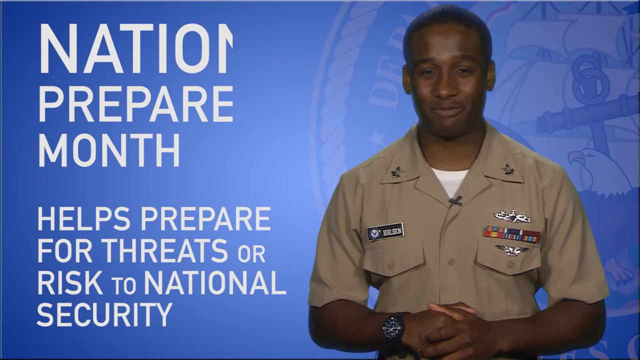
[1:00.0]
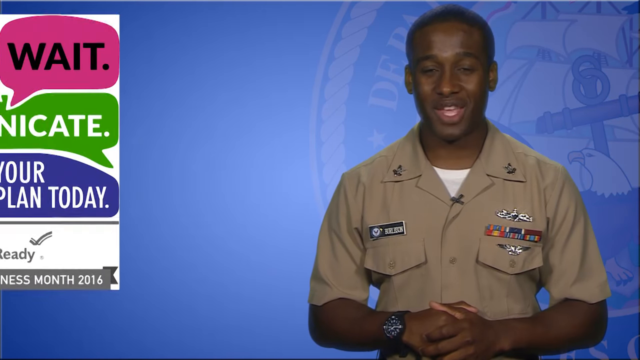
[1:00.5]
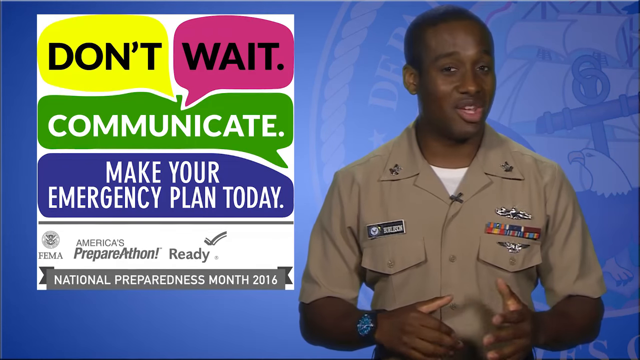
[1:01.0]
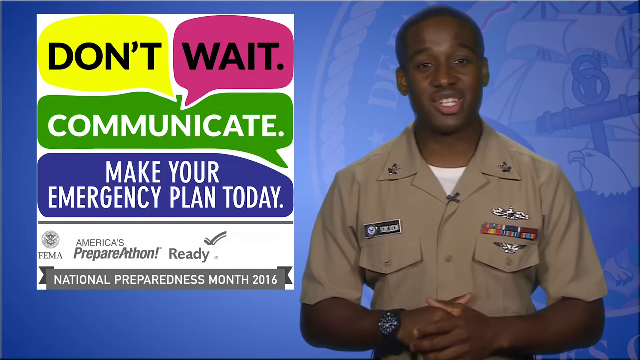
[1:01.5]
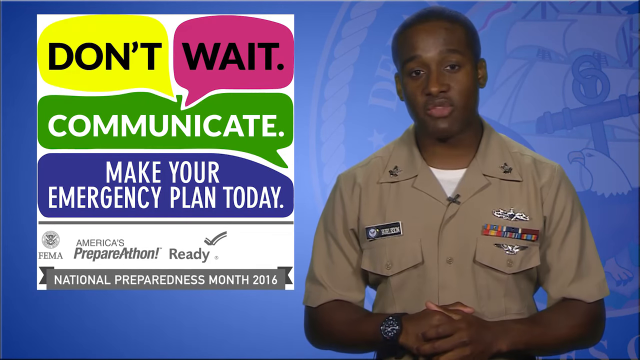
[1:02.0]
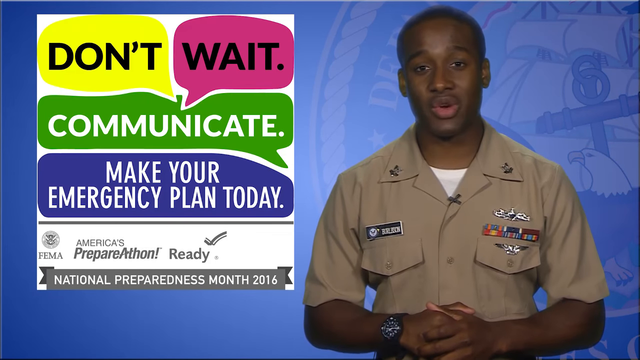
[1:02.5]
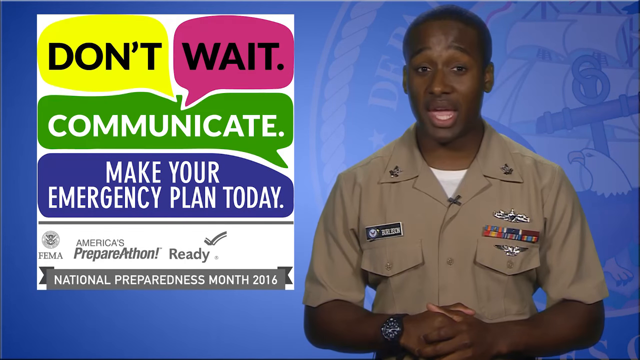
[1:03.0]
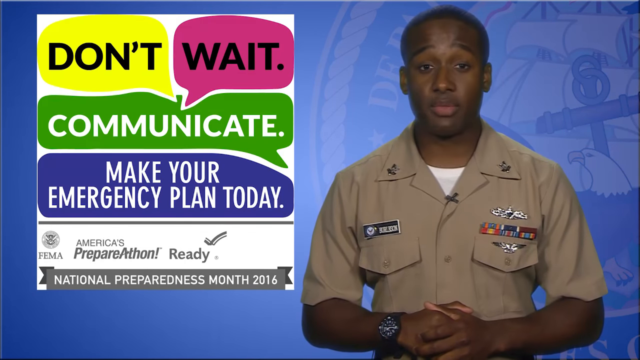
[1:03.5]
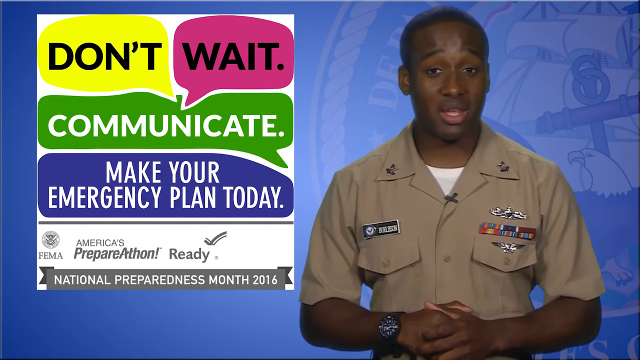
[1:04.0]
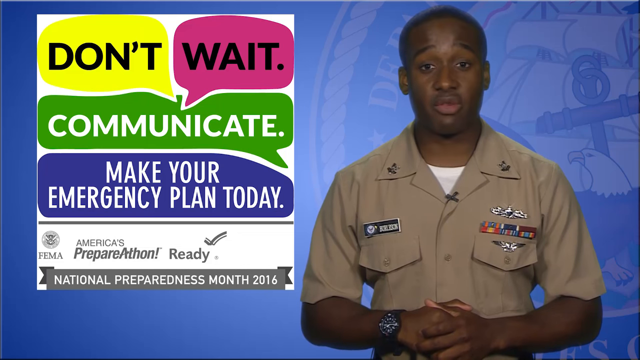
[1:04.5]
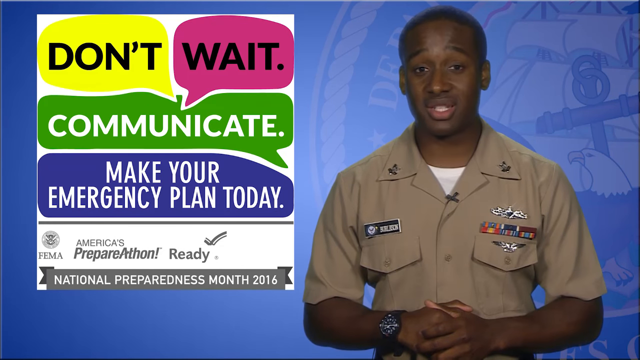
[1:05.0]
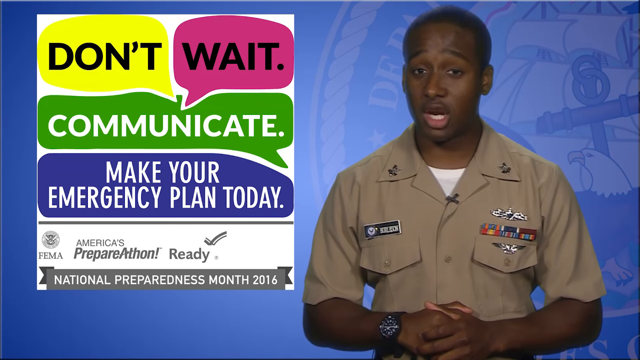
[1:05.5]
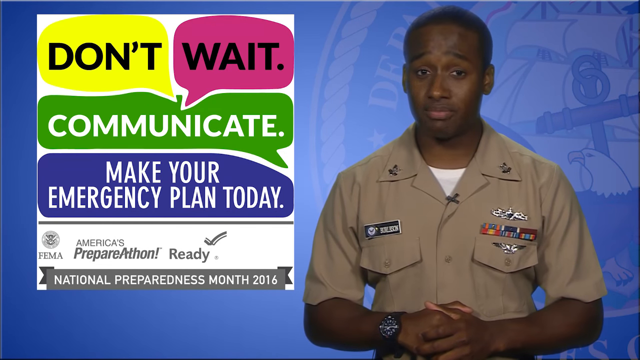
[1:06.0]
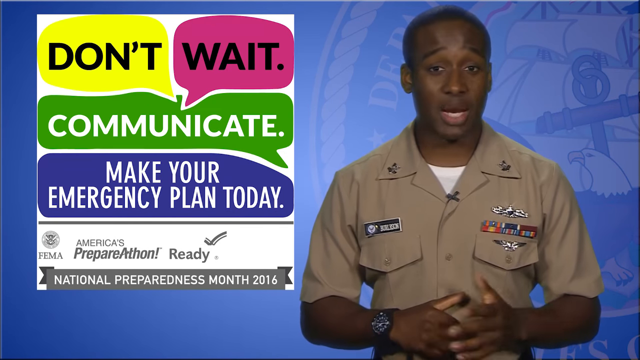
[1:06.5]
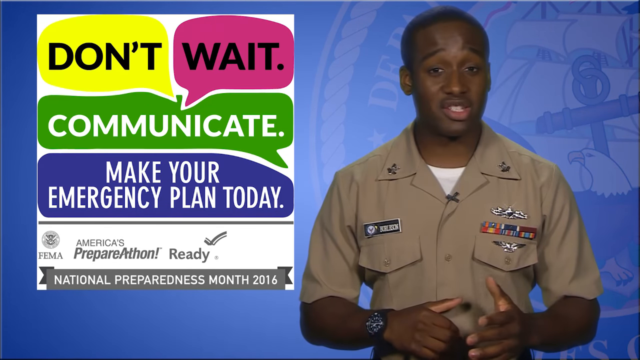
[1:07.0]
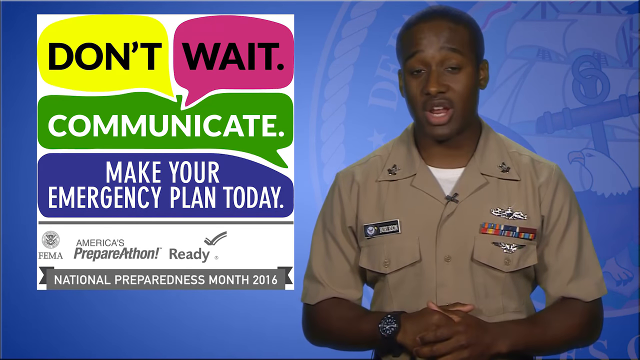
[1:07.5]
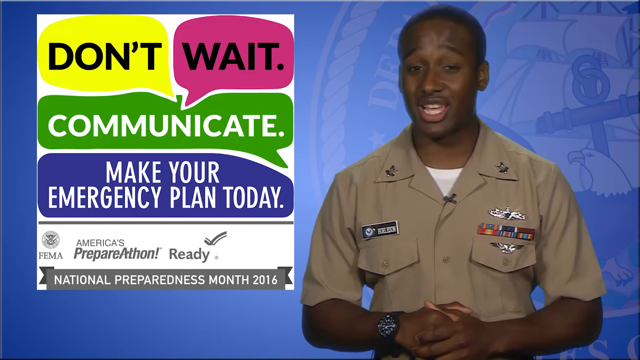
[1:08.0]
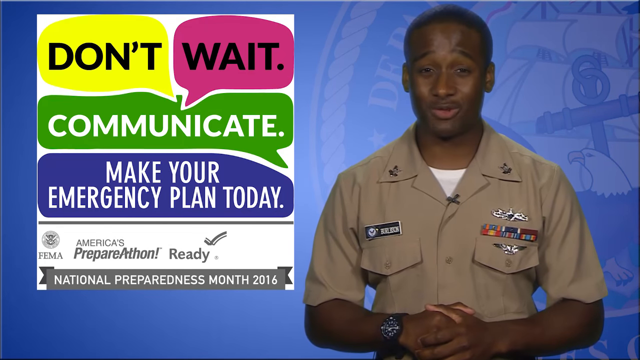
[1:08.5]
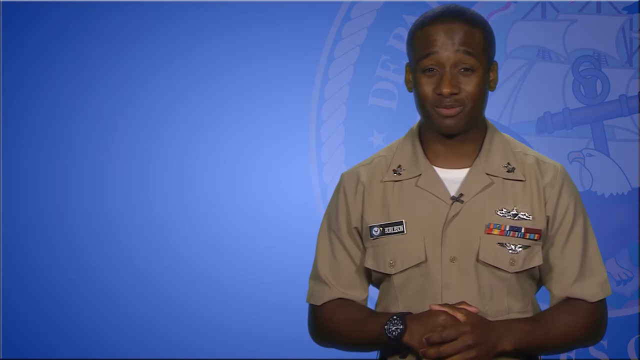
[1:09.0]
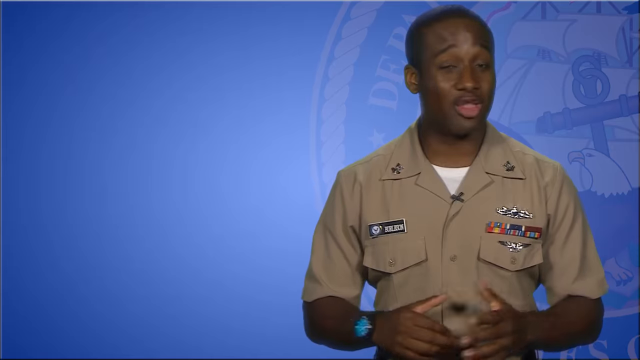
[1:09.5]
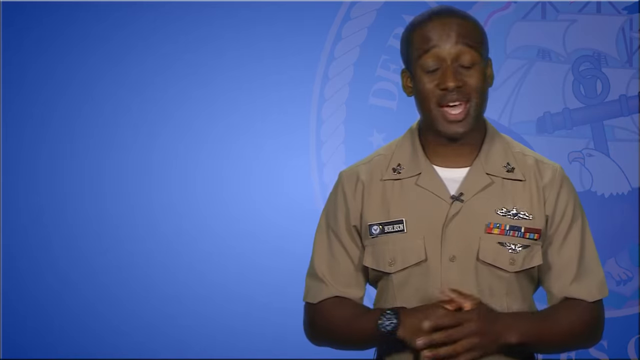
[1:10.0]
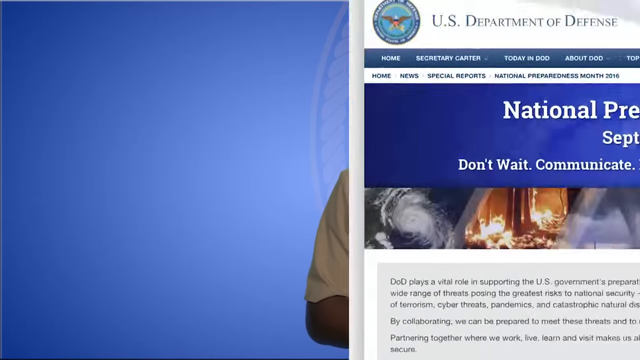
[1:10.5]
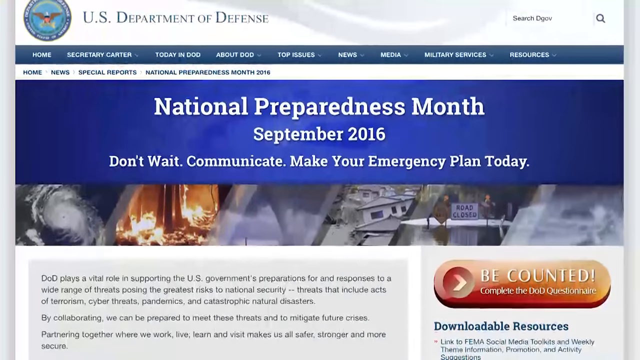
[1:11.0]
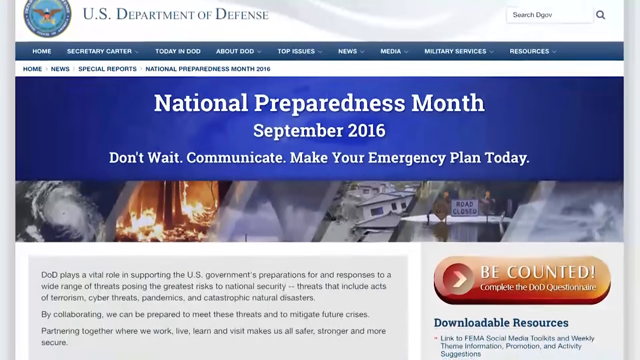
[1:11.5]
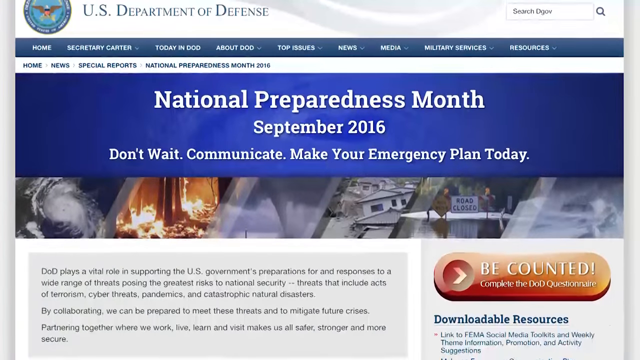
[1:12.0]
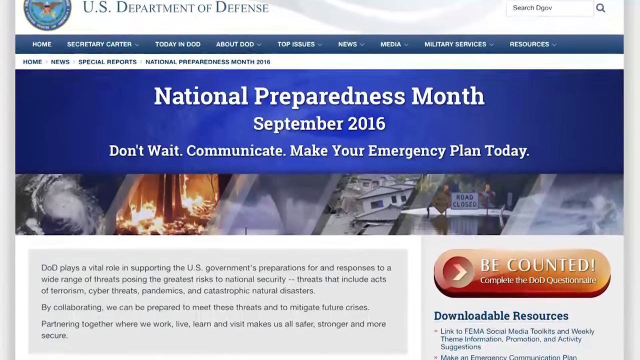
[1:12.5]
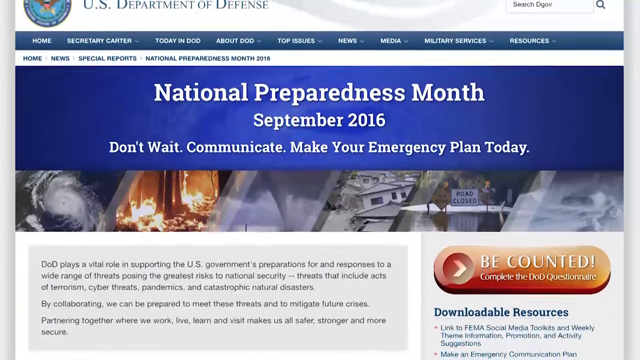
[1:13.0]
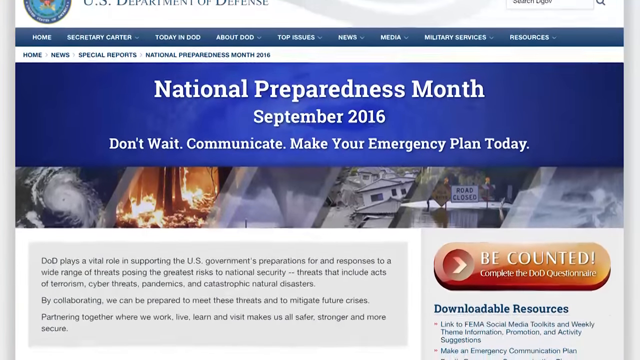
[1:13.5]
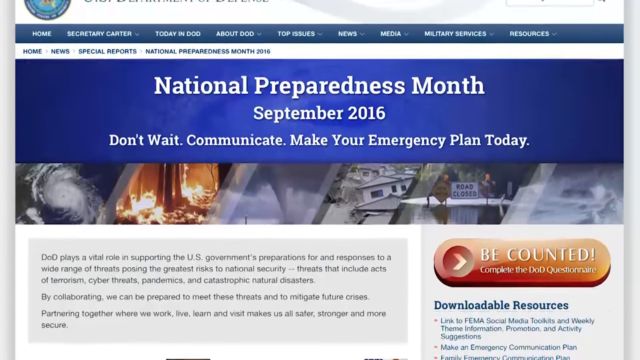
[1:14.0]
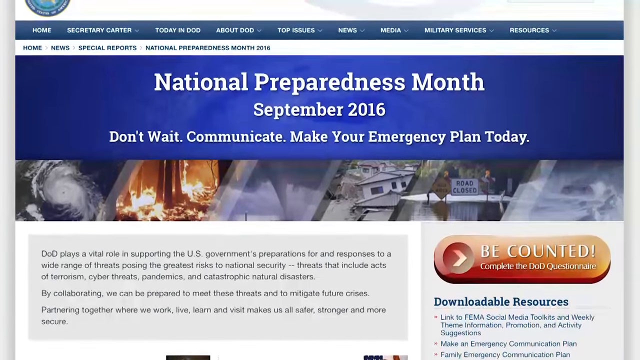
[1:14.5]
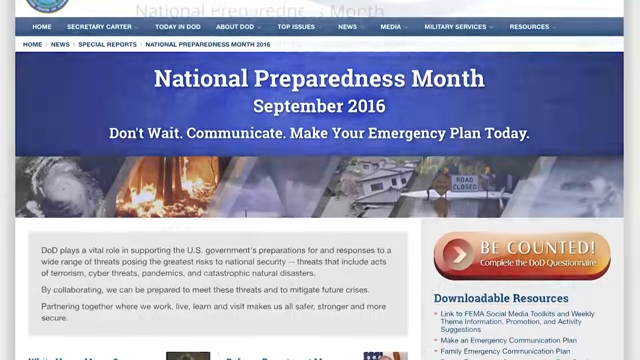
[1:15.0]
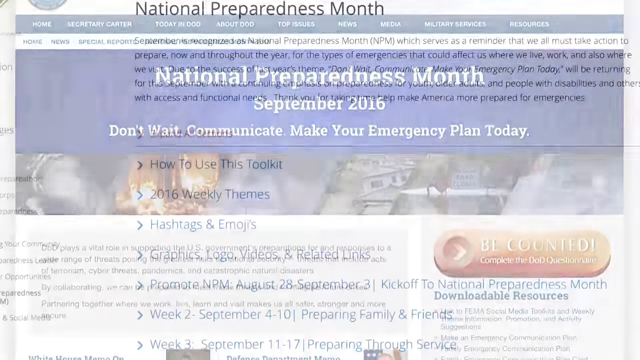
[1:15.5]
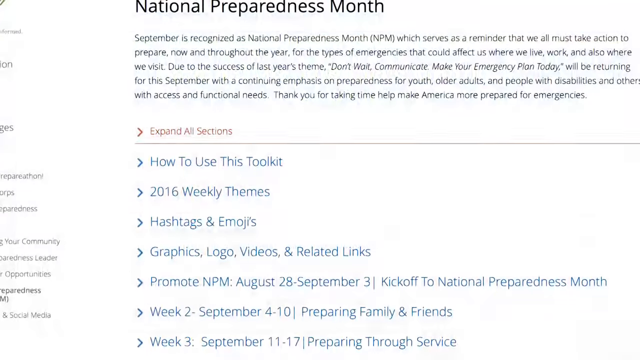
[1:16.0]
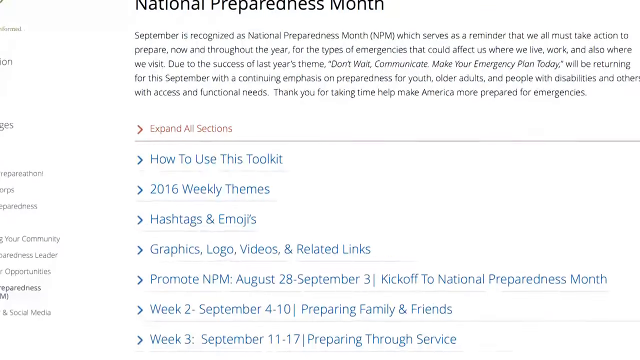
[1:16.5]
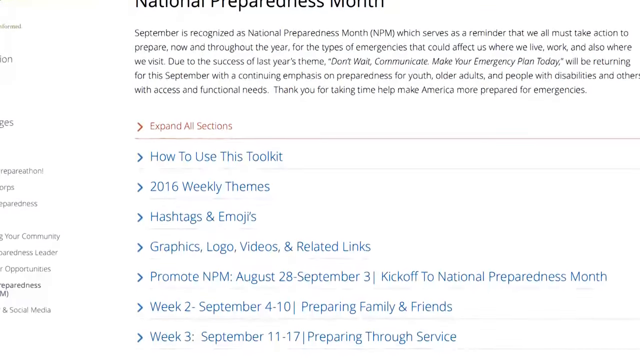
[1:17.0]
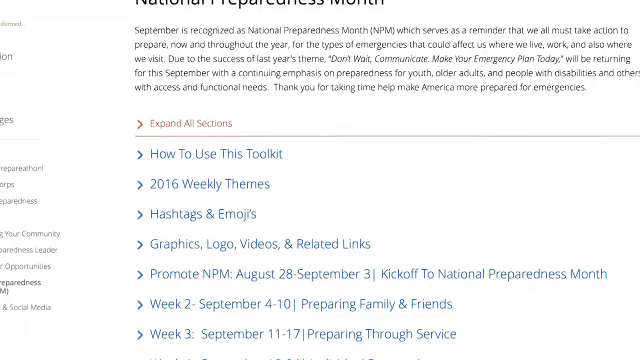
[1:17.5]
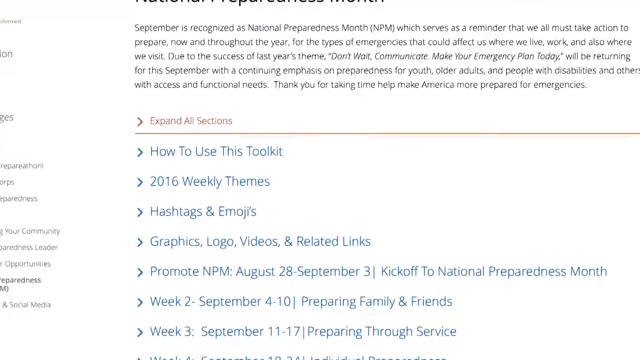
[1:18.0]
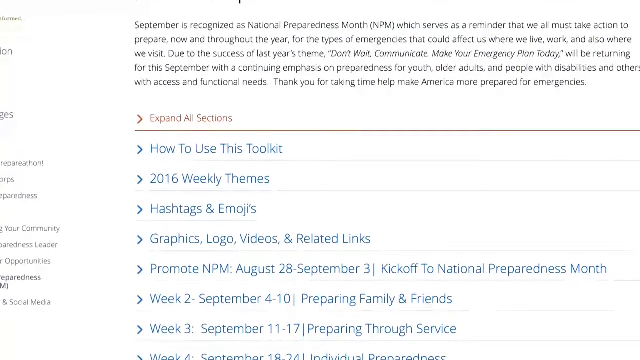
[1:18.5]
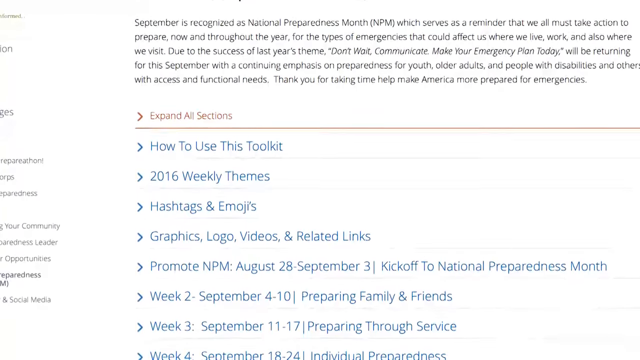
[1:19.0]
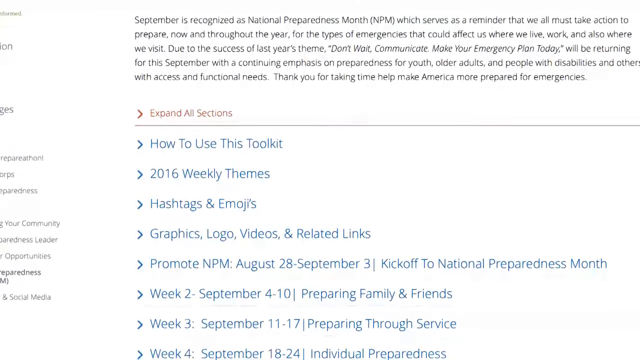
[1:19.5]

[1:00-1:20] A sailor in his uniform is on the right side of the screen, with a watch on his right wrist. White text on the left side reads "National Preparedness Month, helps prepare for threats or risk to national security." It disappears instantly and is replaced by a graphic that reads "don't wait, communicate, make your emergency plan today. FEMA, America's Preparathon Ready, National Preparedness Month 2016." The screen then slides in a view of the US Department of Defense website, on a page for National Preparedness Month, September 2016. It reads "don't wait, communicate, make your emergency plan today" in white text on a blue background. Below that is a graphic of a bunch of disasters, and below that is text that looks like the main article. The view then changes to maybe a different website, reading "National Preparedness Month" and showing different sections about the month of September.